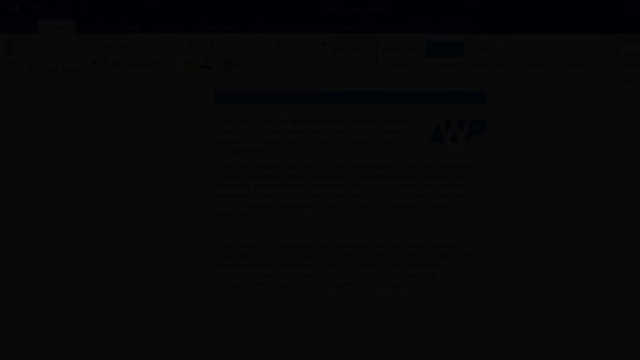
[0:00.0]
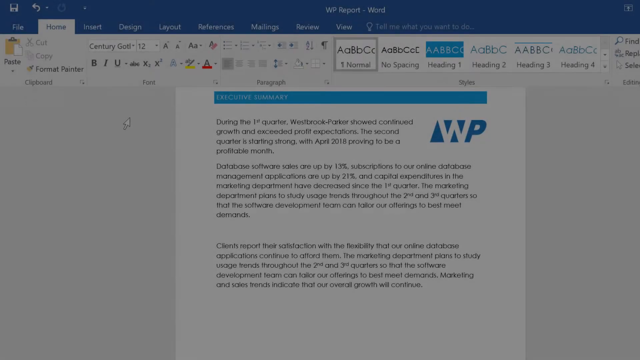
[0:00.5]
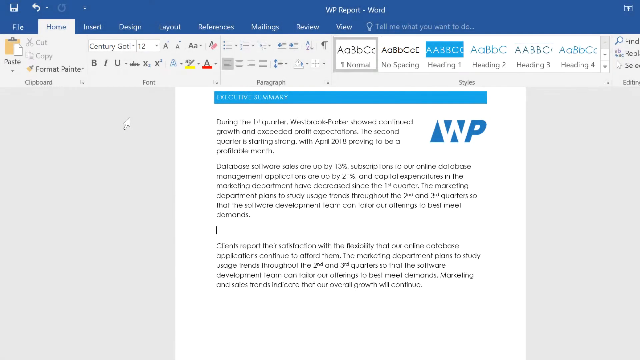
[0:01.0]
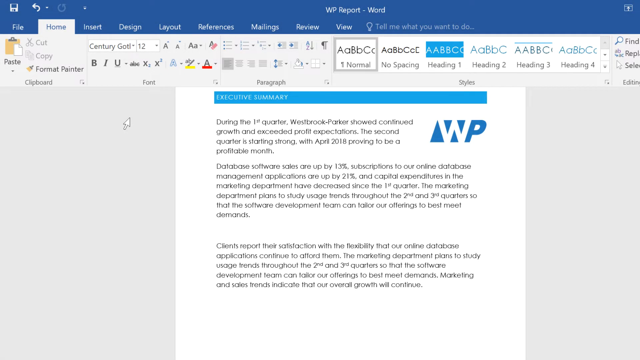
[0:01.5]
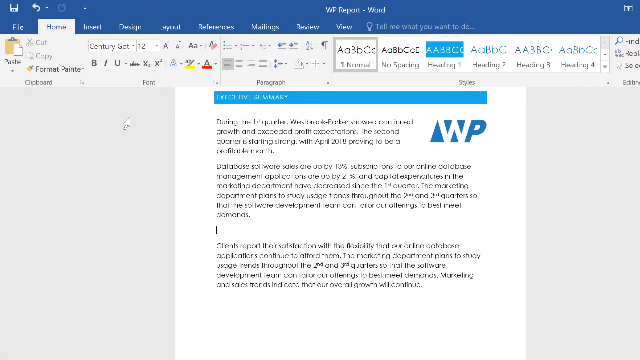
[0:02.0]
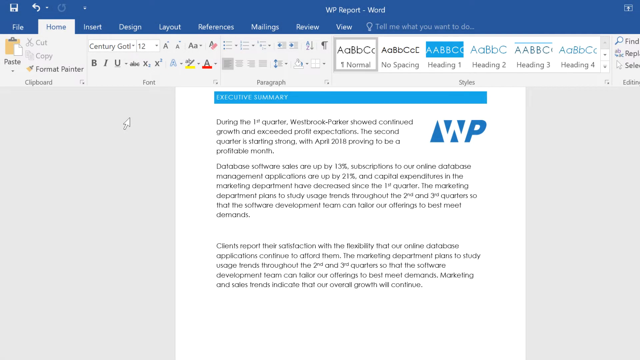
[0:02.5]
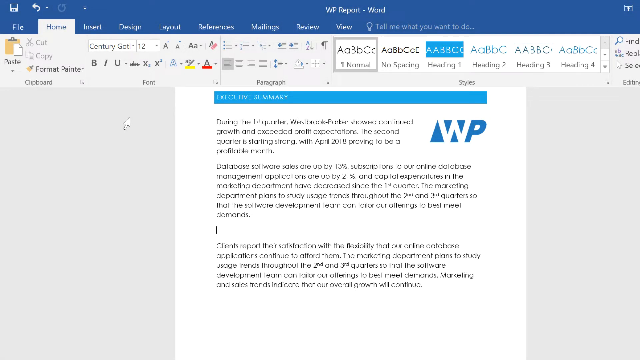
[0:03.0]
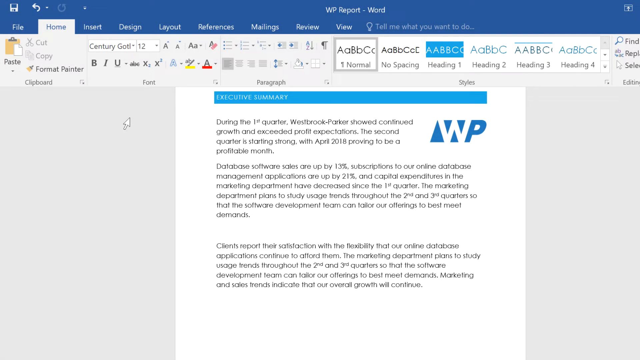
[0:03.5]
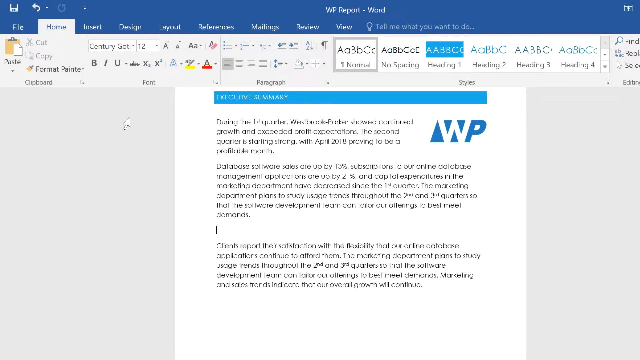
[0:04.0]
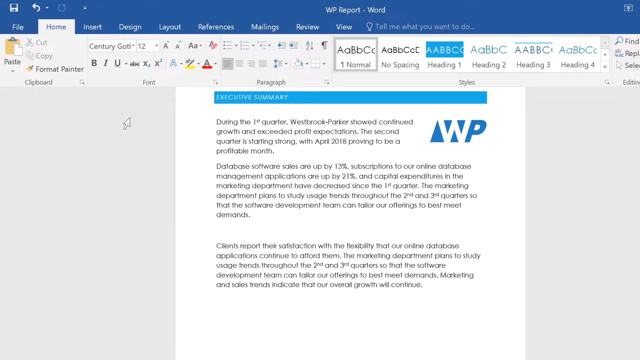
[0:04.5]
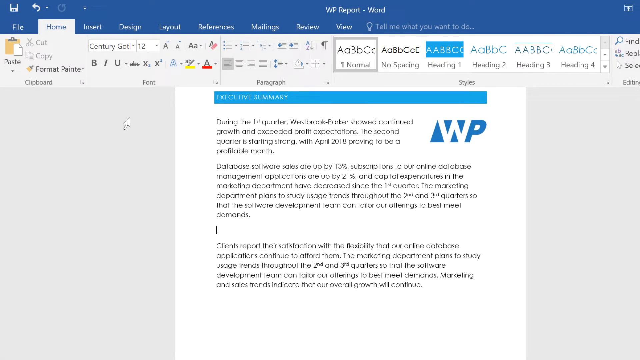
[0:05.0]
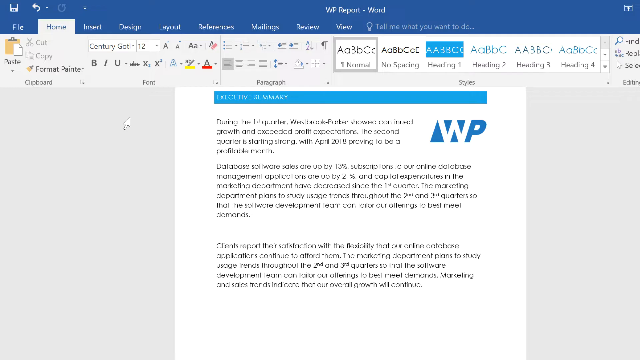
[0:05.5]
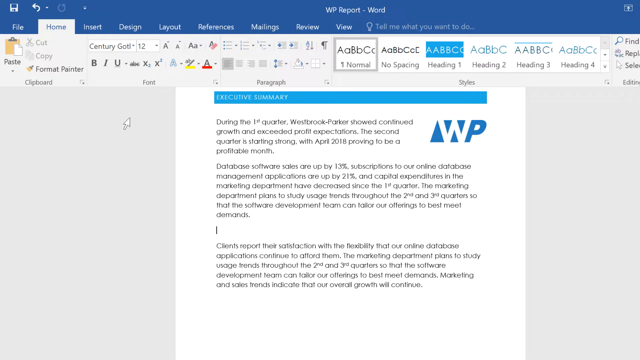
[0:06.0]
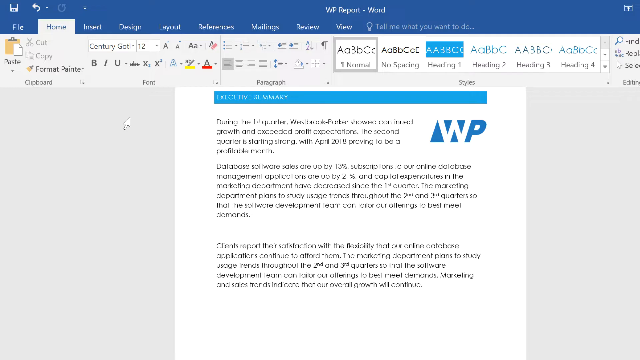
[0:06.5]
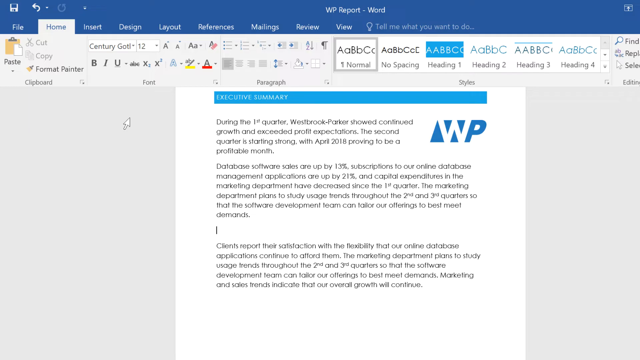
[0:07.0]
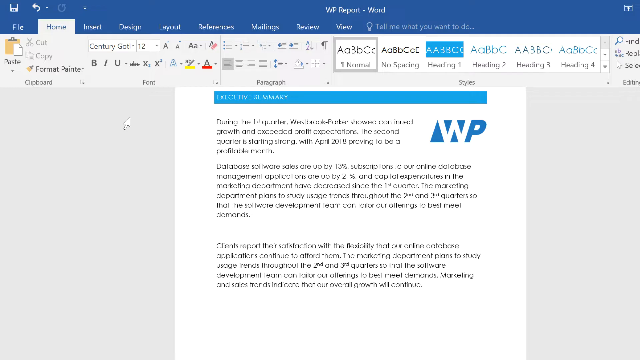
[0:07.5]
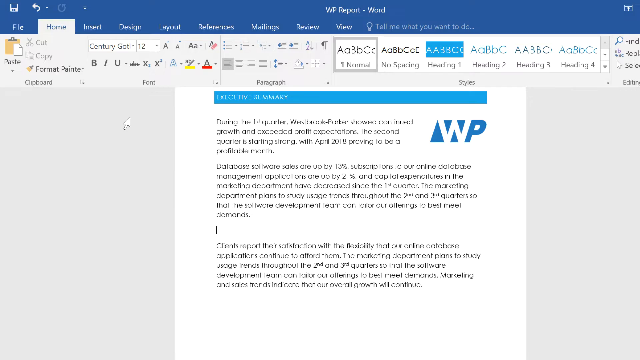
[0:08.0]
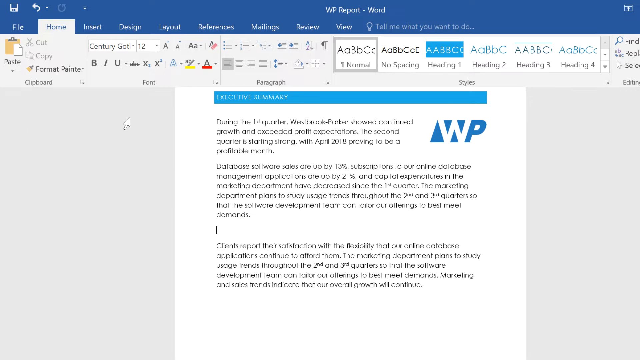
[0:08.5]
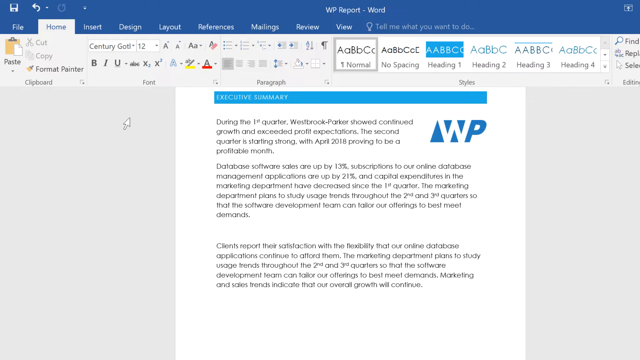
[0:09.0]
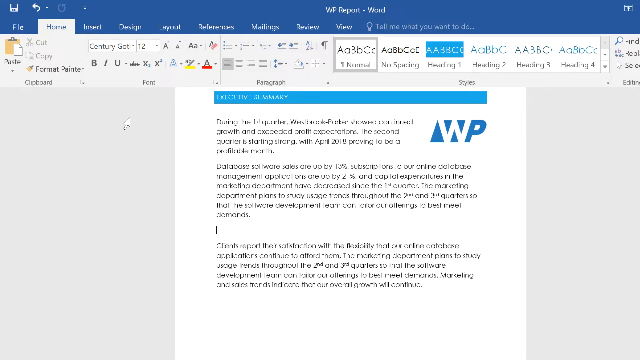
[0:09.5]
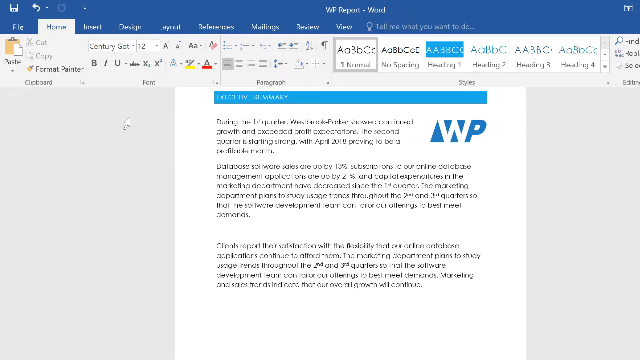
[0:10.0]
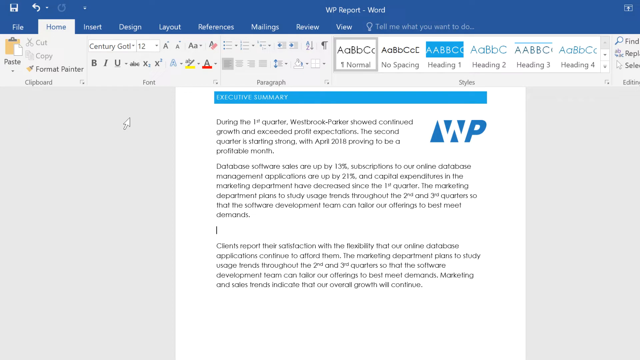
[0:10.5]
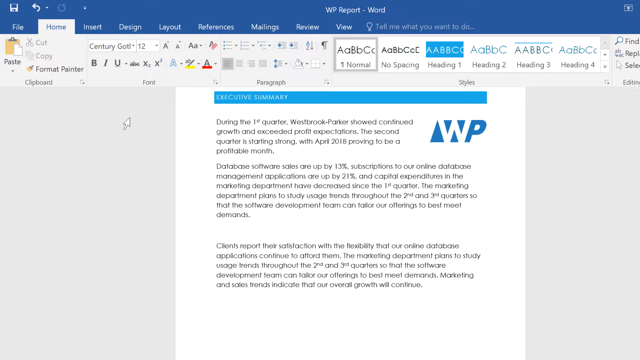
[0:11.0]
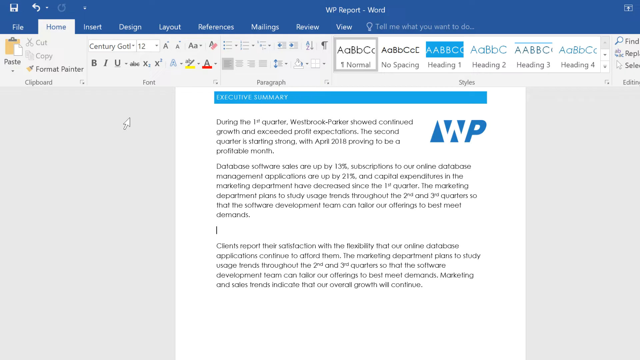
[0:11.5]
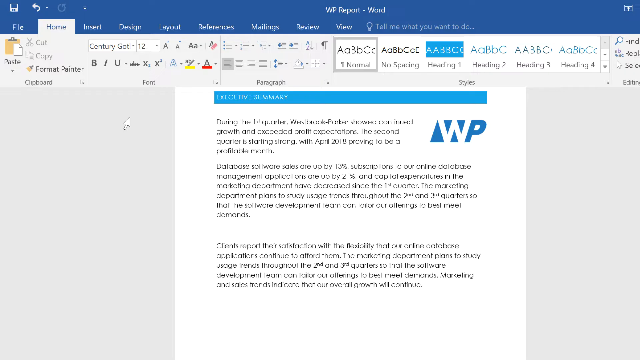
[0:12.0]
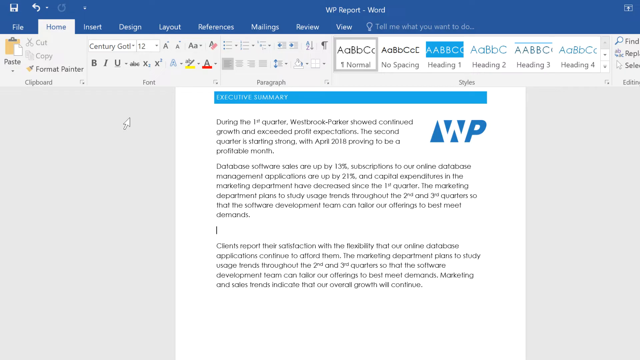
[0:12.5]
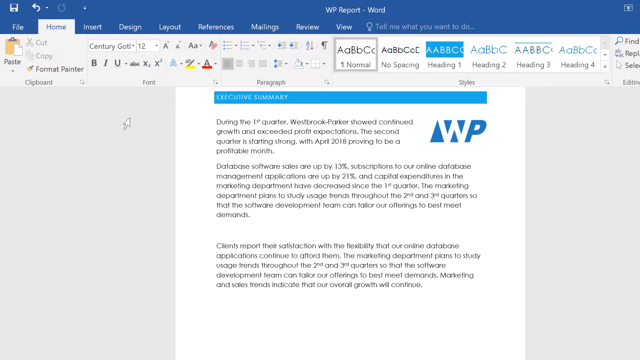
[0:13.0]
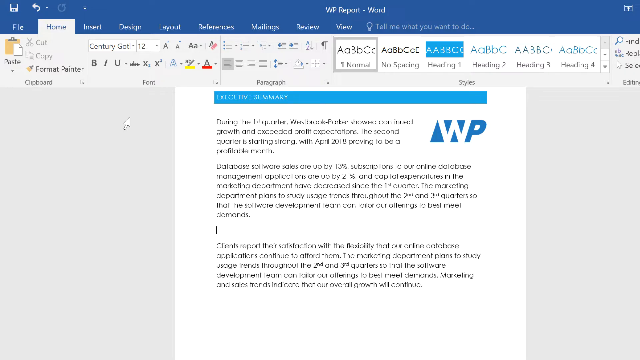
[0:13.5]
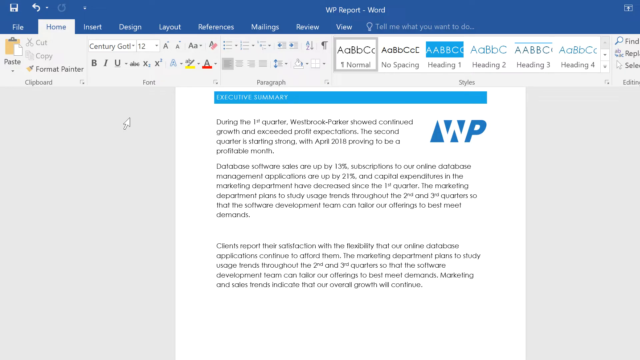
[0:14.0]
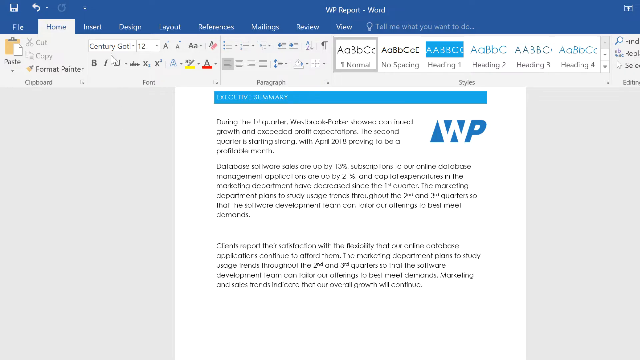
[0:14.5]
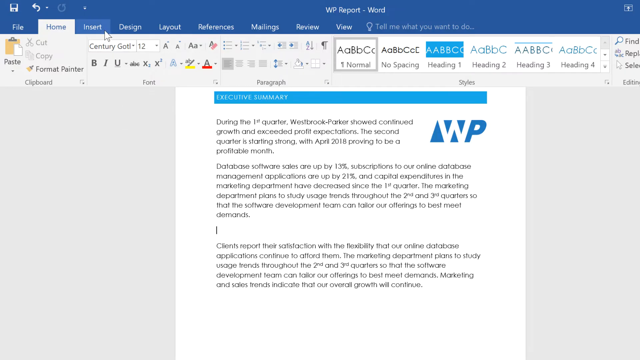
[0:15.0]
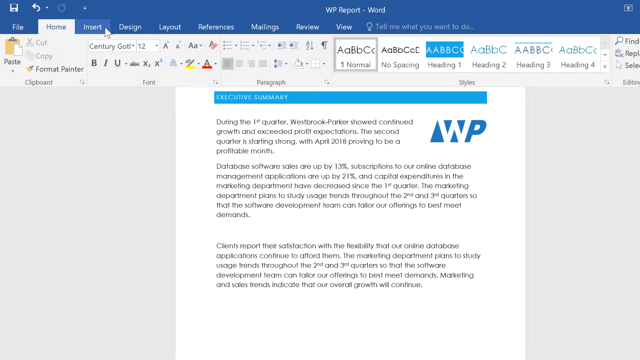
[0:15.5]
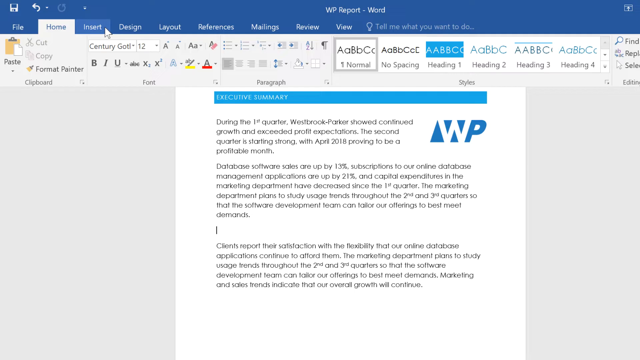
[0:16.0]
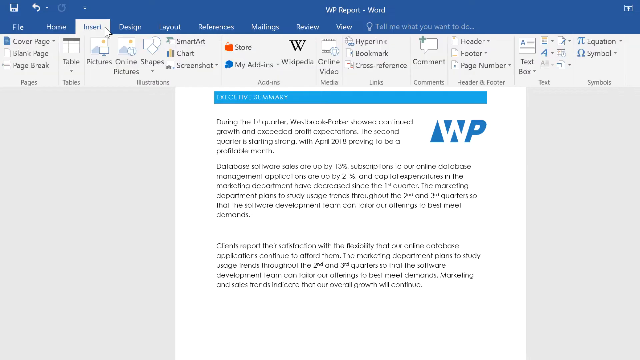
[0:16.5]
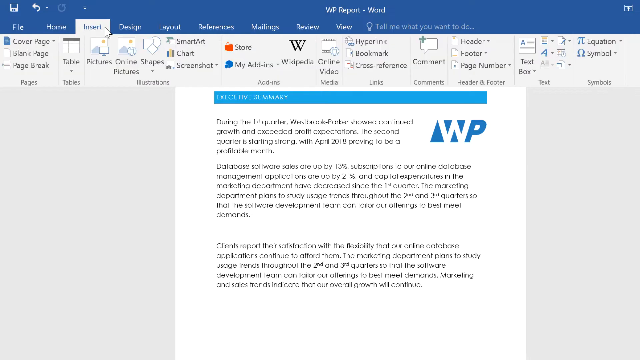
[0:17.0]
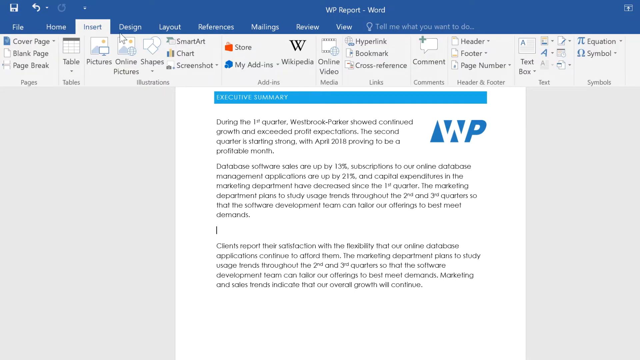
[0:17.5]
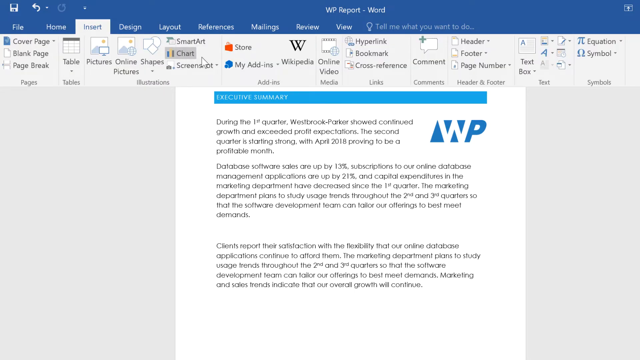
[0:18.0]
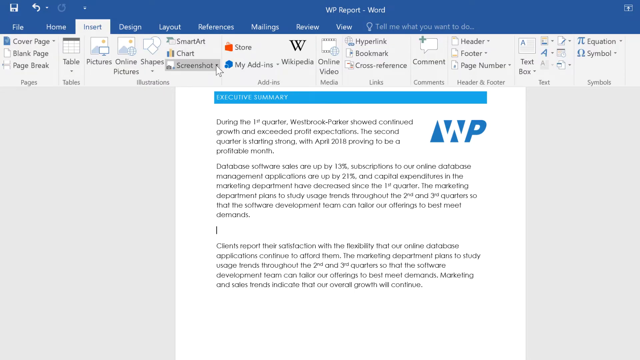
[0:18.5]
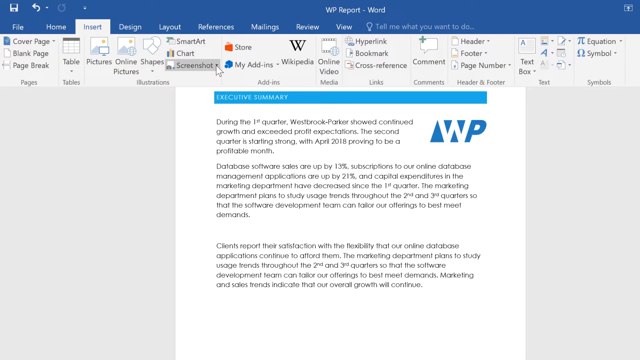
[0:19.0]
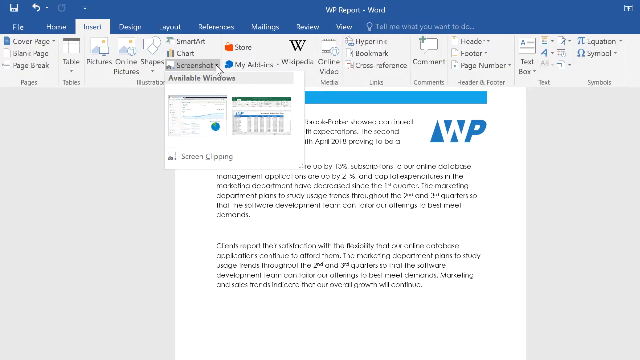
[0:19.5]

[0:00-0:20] What looks like Microsoft Word is open, with someone in the middle of a letter. The font is a little blurry. The user goes to Insert and then to available windows. The document is saved as WP report, and the font is Century, apparently at size 12. It looks like an older version of Word, and the video is most likely some type of tutorial.